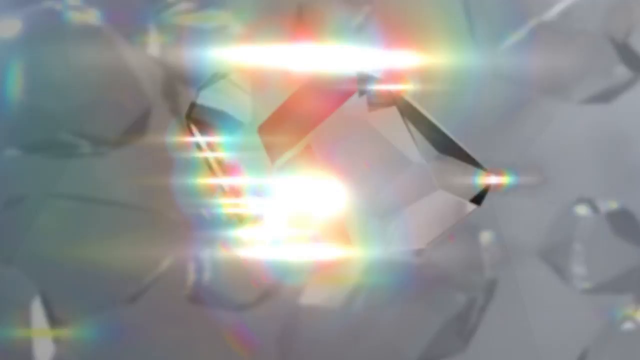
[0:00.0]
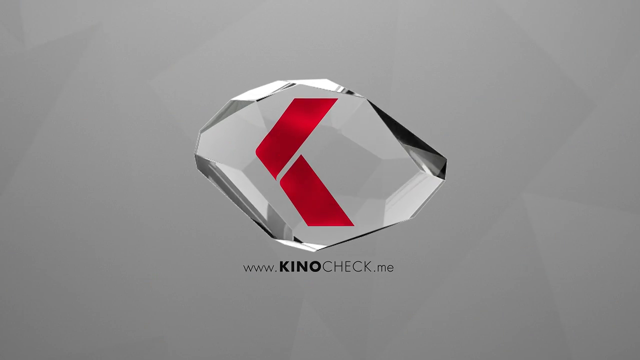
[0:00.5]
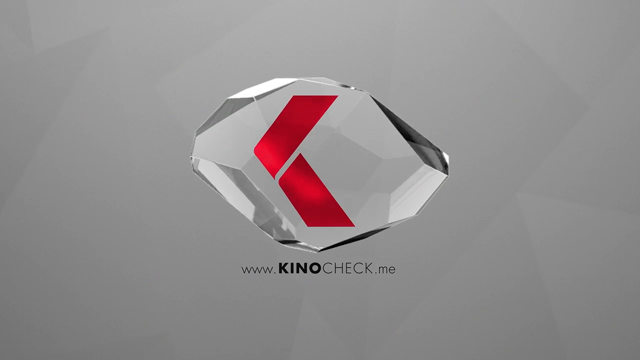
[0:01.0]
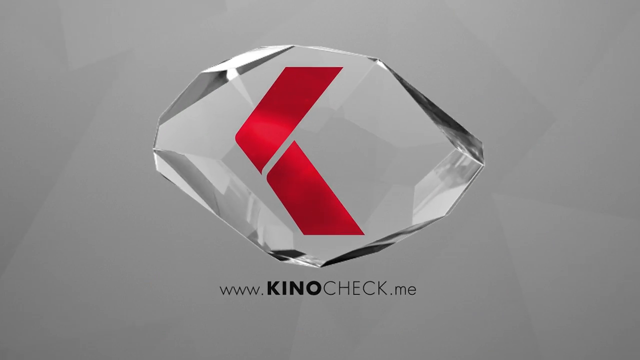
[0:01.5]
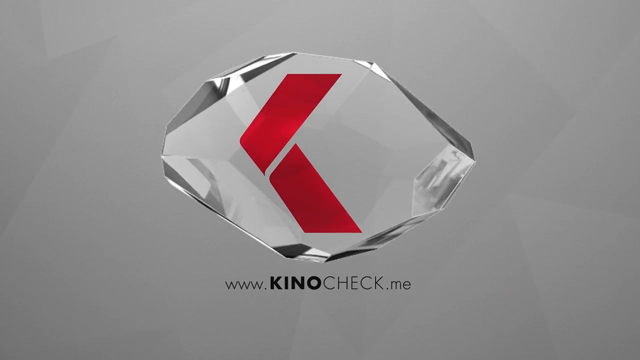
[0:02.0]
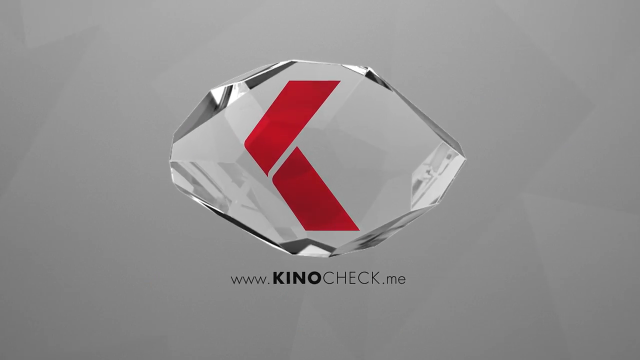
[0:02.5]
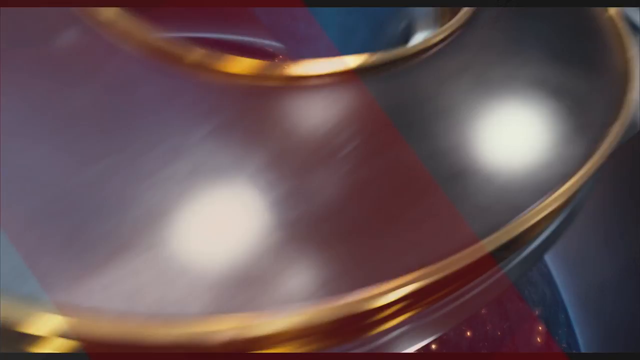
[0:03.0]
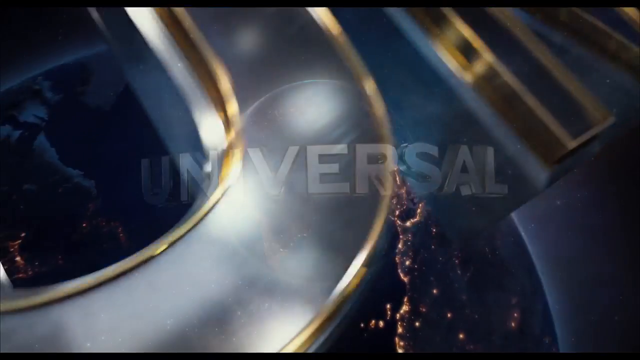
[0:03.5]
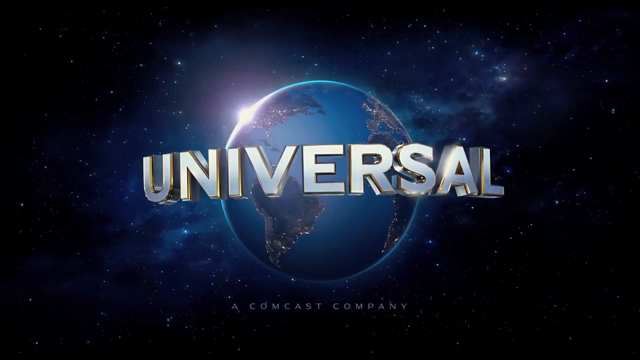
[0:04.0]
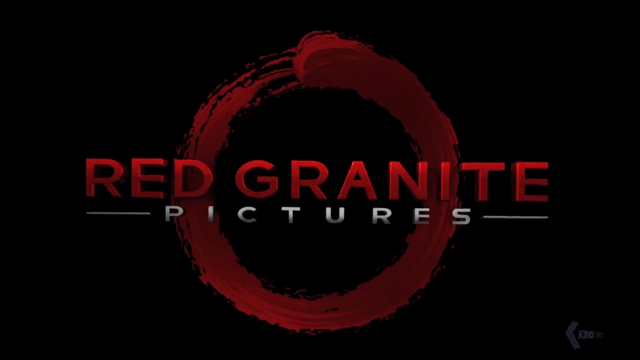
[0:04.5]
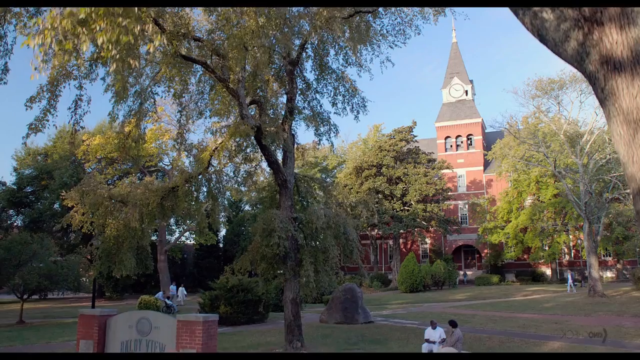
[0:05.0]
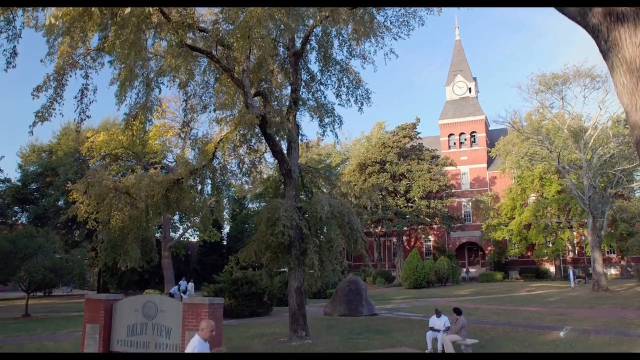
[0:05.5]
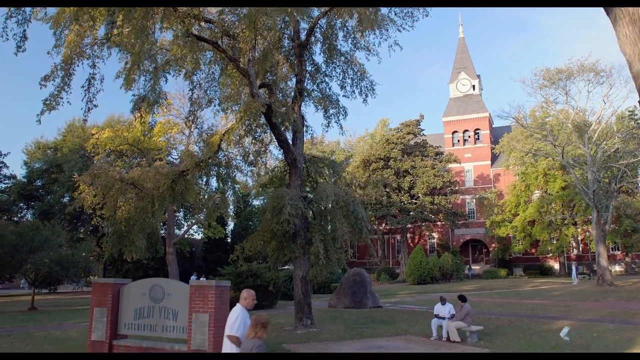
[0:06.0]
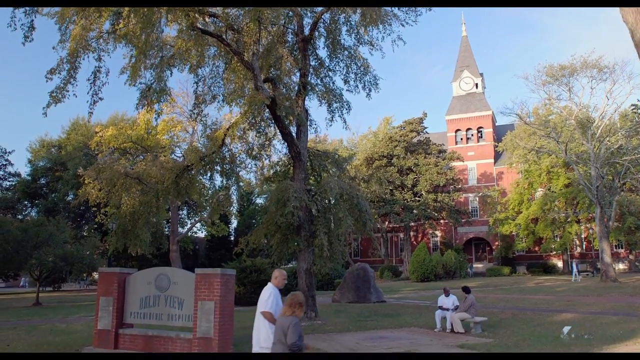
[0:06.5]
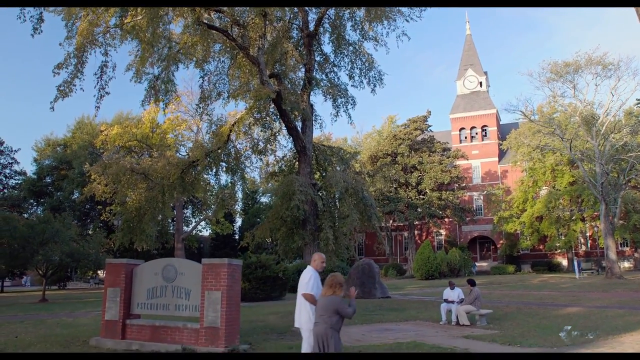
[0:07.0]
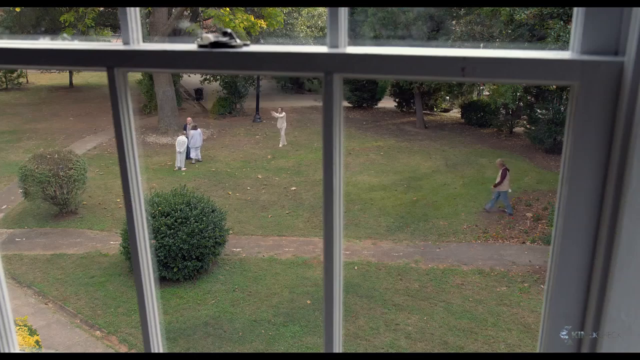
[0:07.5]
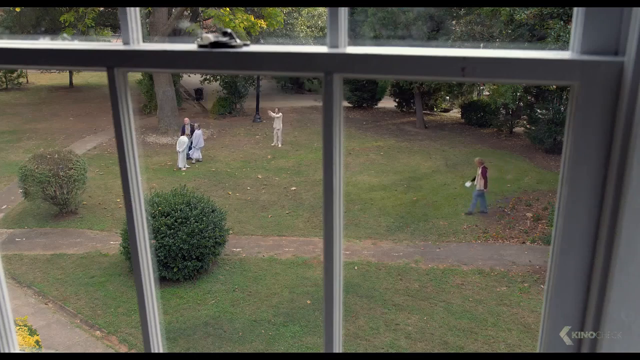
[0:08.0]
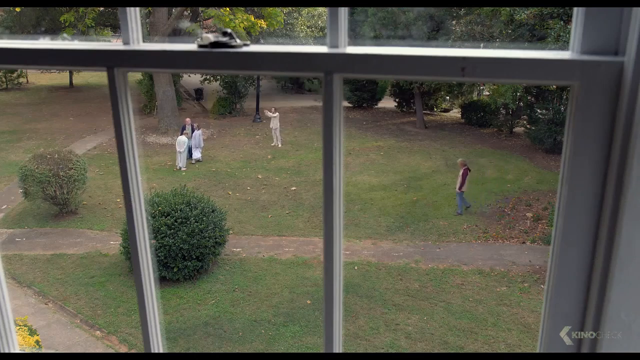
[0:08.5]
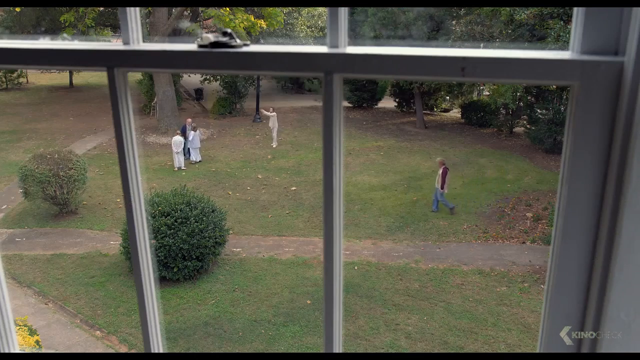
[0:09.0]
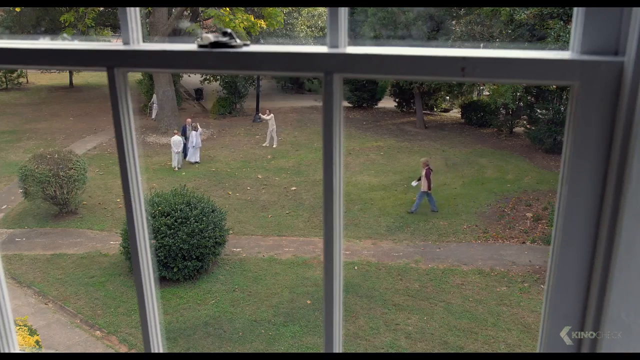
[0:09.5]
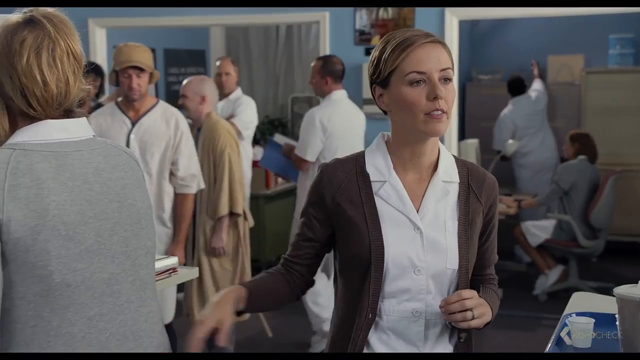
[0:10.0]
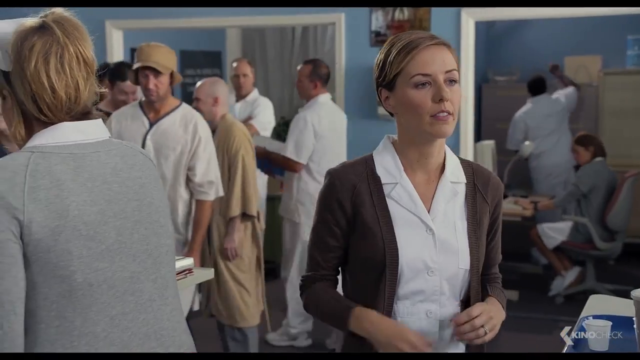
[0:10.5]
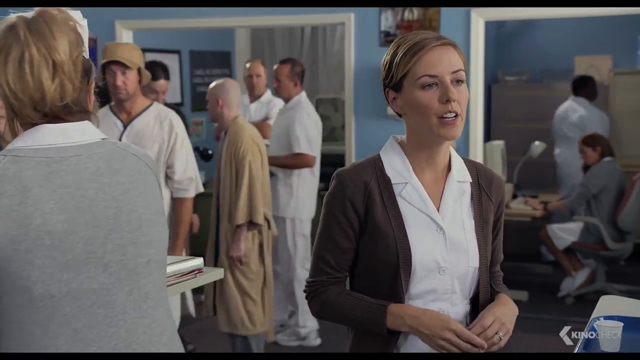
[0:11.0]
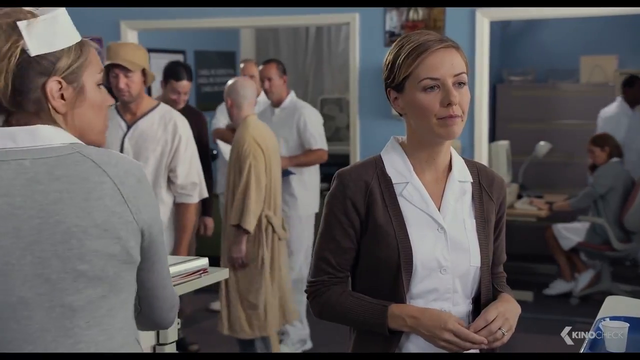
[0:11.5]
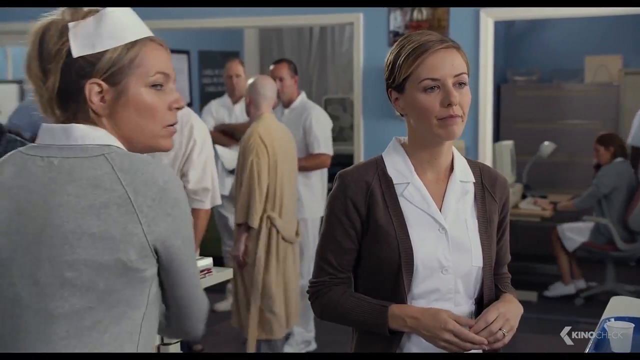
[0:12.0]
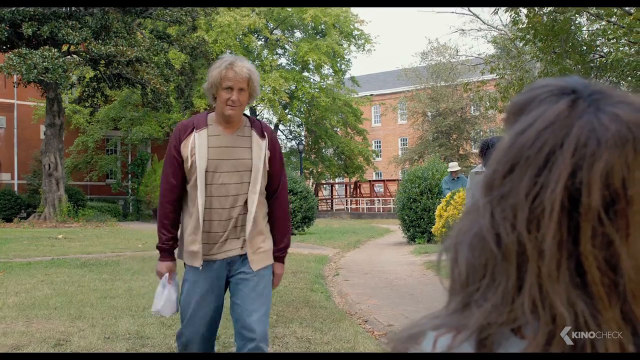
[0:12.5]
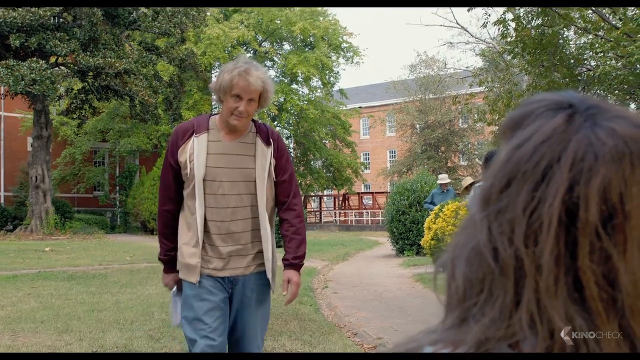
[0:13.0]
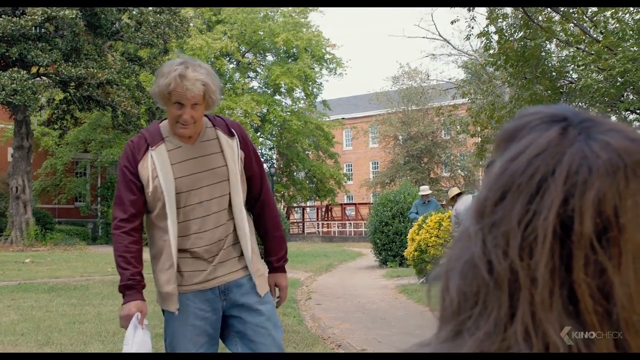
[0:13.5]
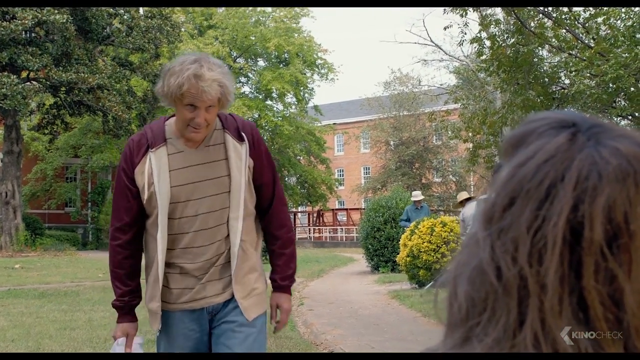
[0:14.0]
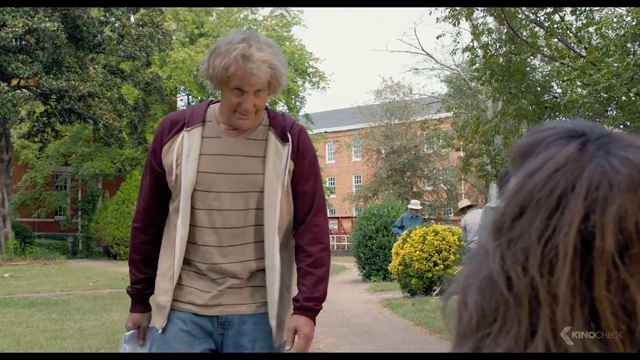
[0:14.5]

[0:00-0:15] A logo appears, loosely looking like maybe a K inside a glass, diamond-type rock, with "www.kinocheck.me" below it, probably a brand or video production studio. "Universal Studios" flashes by very quickly, followed by "Red Granite Pictures", apparently the studios of a movie. The scene then cuts to a college campus whose name cannot be made out, where a bunch of people are walking. Next comes a medical area: a woman in scrubs and a cardigan looks off into the distance while talking to another nurse, and they are perhaps watching an older man in a hoodie shirt and jeans walk up to a long-haired man.